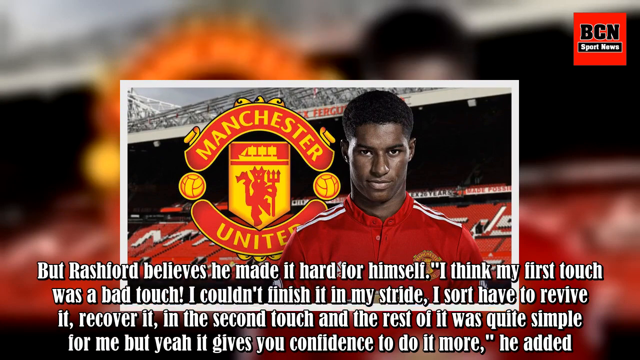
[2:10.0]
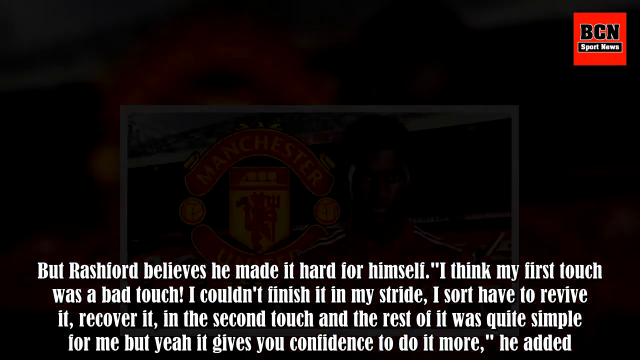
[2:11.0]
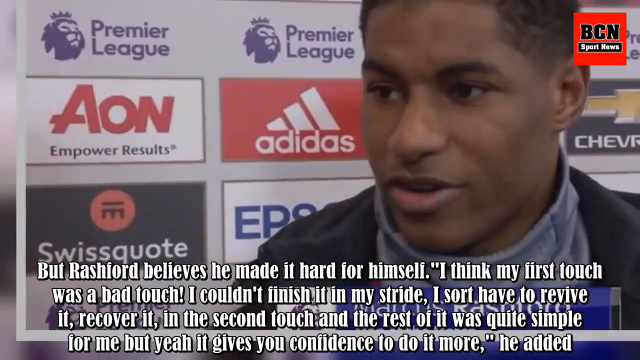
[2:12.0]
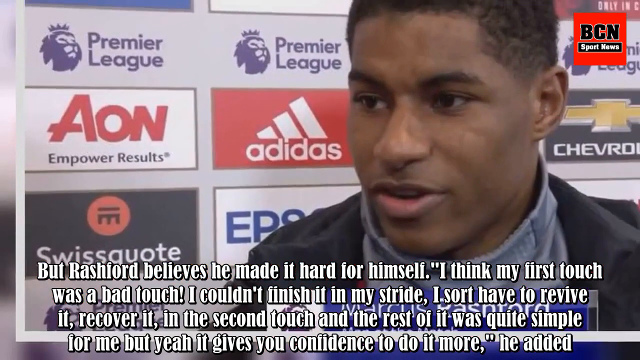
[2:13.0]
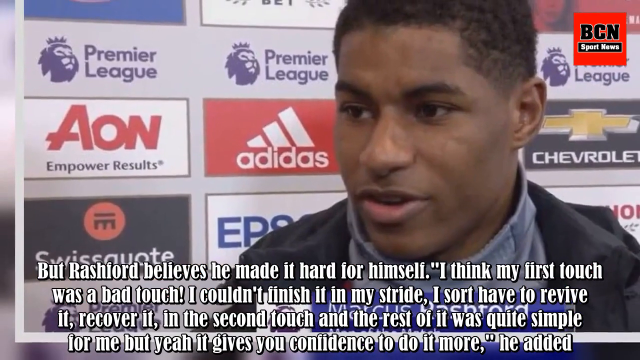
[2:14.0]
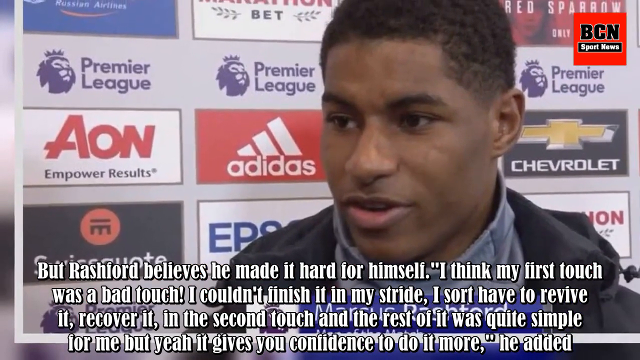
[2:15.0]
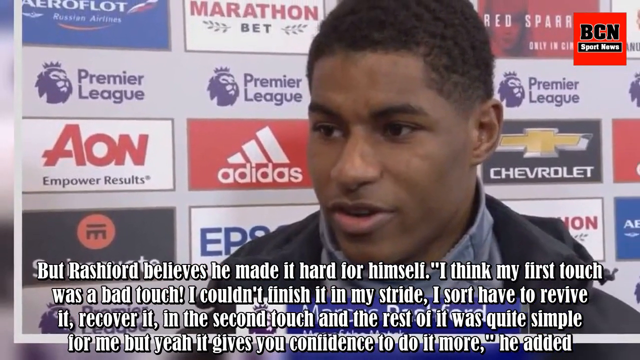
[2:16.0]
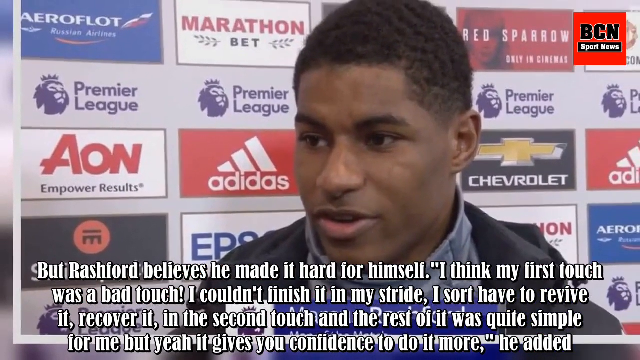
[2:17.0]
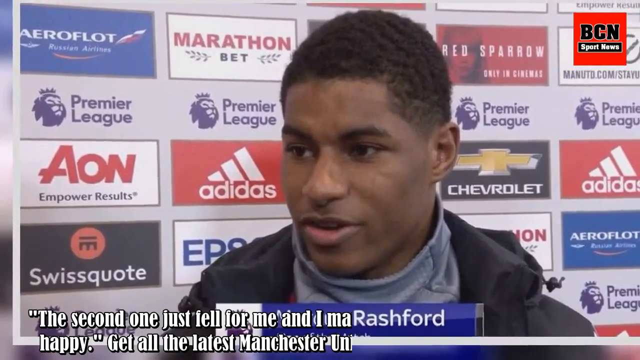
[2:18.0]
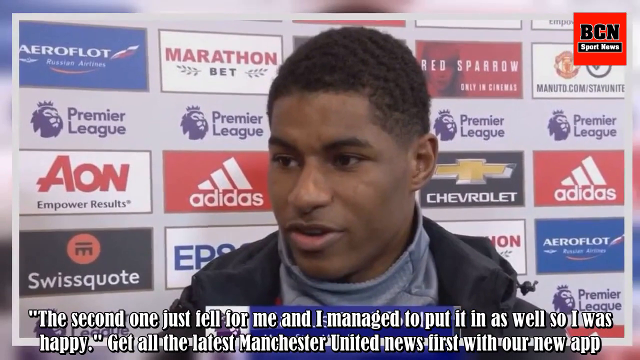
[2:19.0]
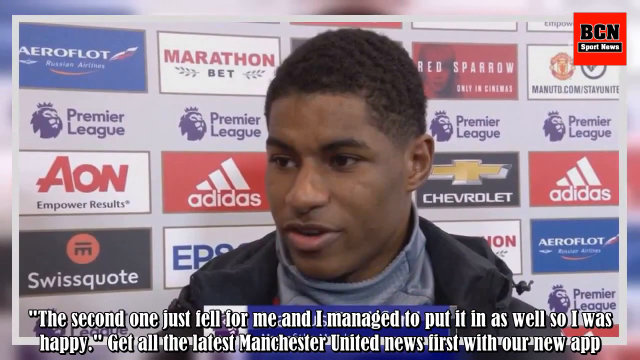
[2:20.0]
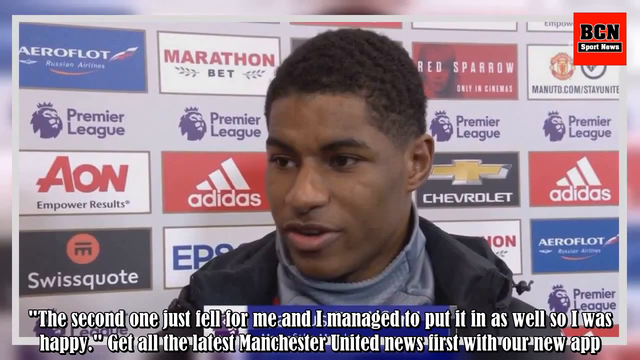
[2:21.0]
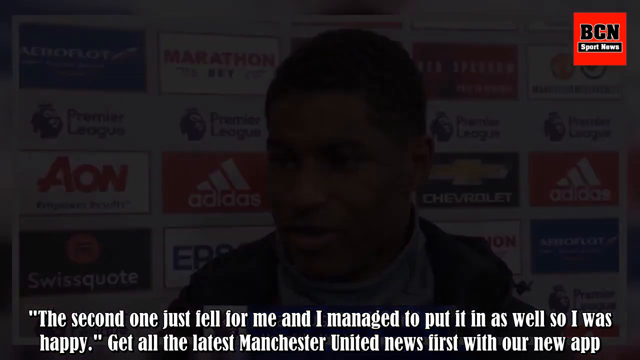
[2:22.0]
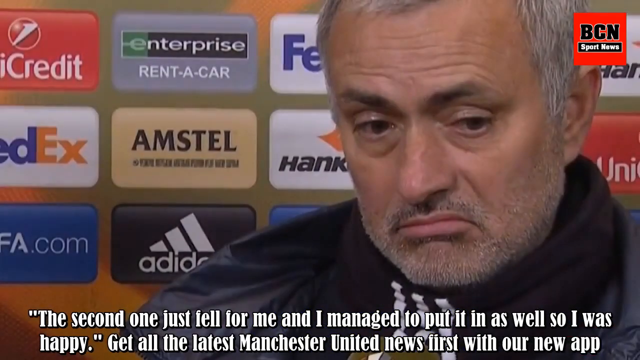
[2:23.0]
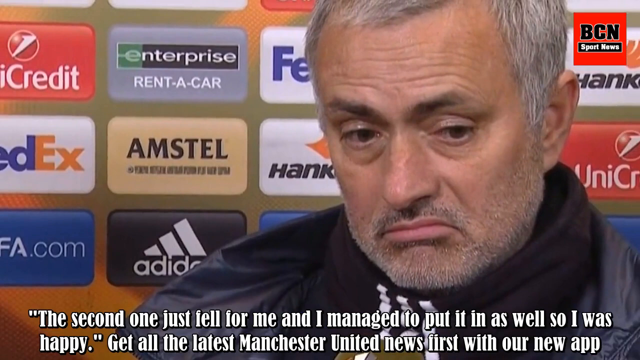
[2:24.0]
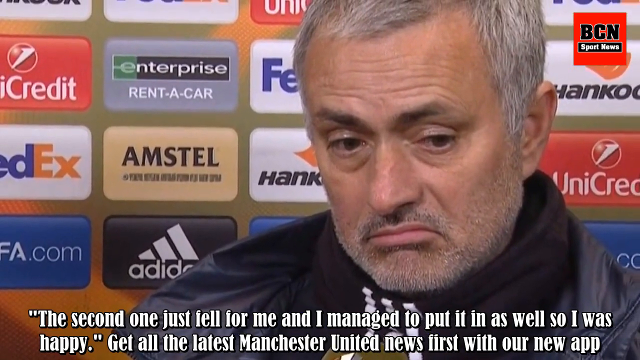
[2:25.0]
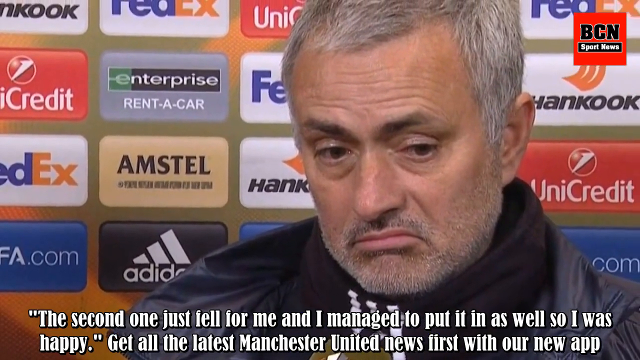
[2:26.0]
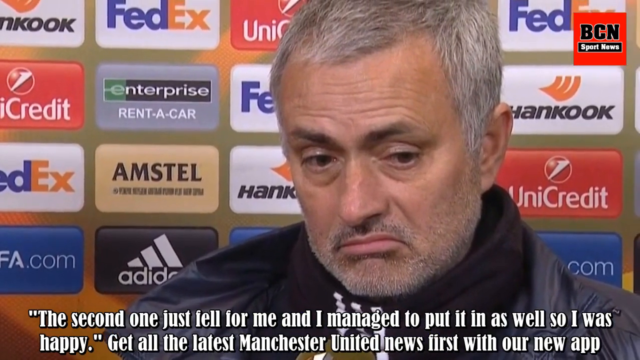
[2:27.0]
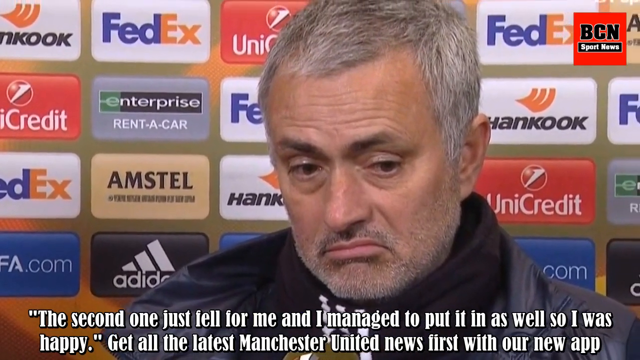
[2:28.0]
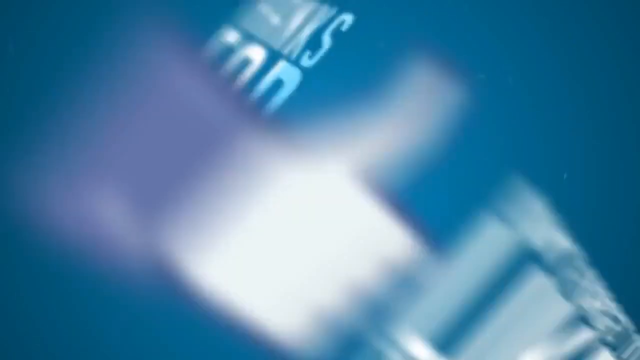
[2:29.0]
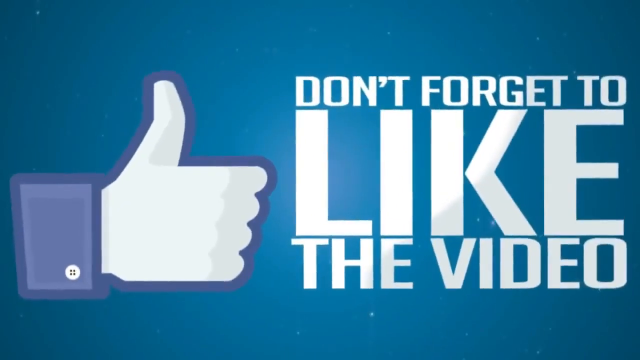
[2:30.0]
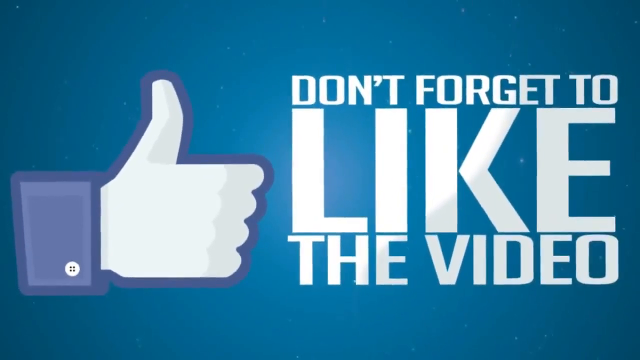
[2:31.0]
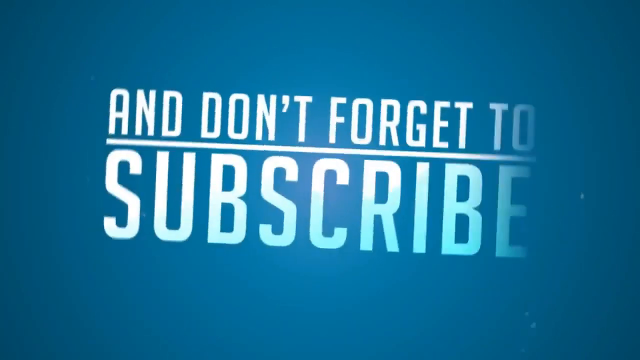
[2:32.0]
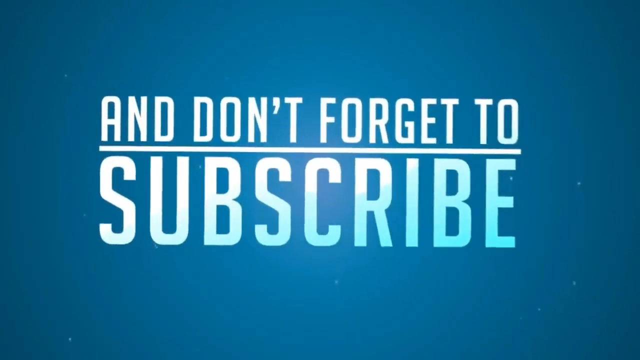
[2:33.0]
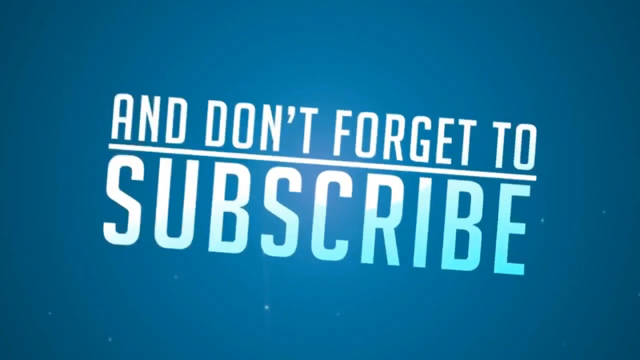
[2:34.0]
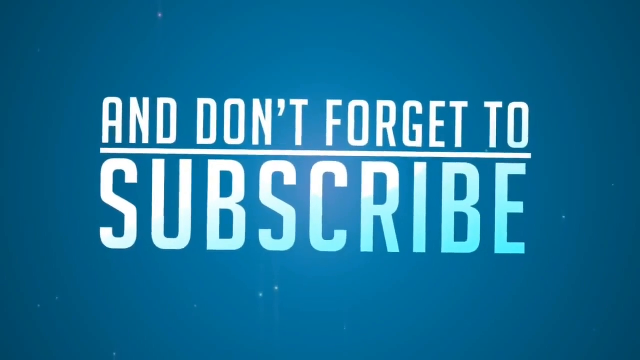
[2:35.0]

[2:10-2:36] A profile picture, apparently of Rashford, moves down and fades out, returning to what seems to be a casual picture of him talking with another individual. He has on maybe a hoodie and some type of shirt that covers his neck a little. Advertisements are behind him, and he seems to be inside a studio of some sort; they include Aeroflot, Marathon Bet, Red Sparrow, Premier League and Adidas. This fades out to the coach again, who still has the same look, with advertisements next to him such as Amstel, Enterprise Rent-A-Car, UniCredit, FedEx and Adidas. The view pans to the end, where text says "don't forget to like the video" beside a fairly large white thumbs-up icon. Everything is kind of shaky for a little while, and then the text says "and don't forget to subscribe."